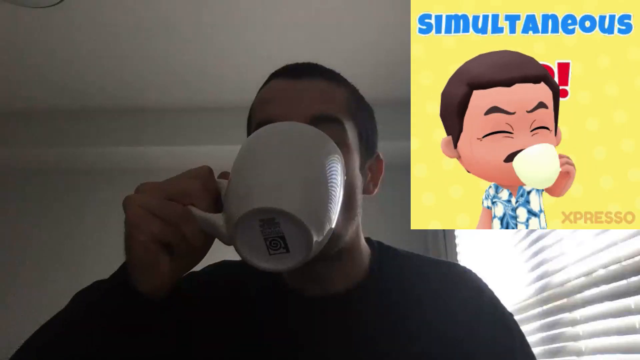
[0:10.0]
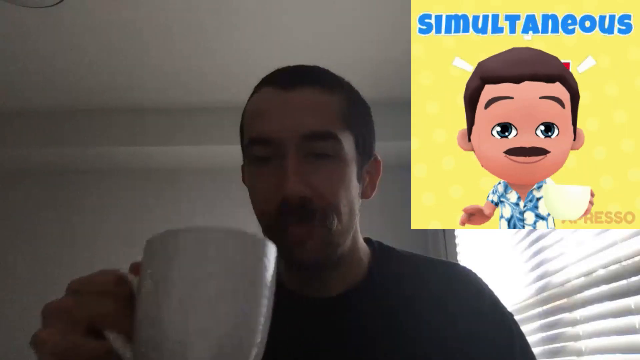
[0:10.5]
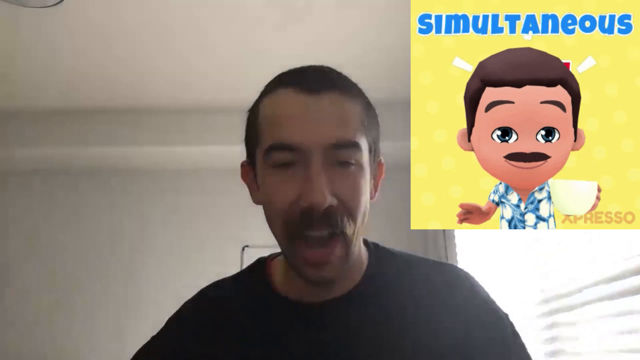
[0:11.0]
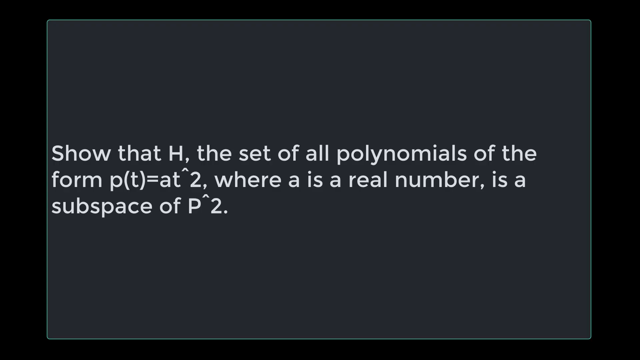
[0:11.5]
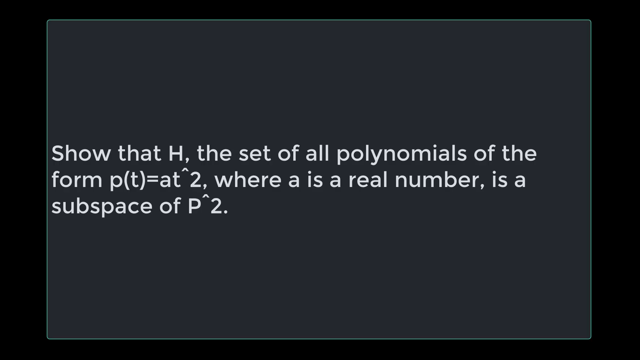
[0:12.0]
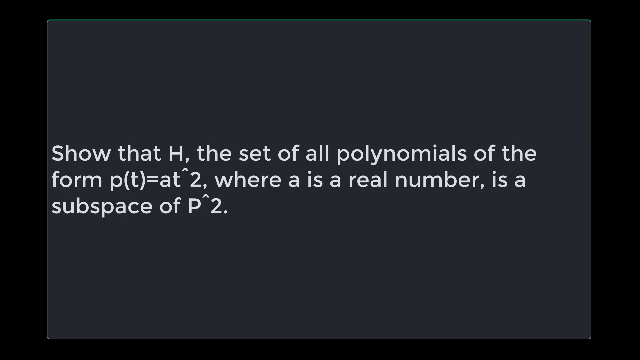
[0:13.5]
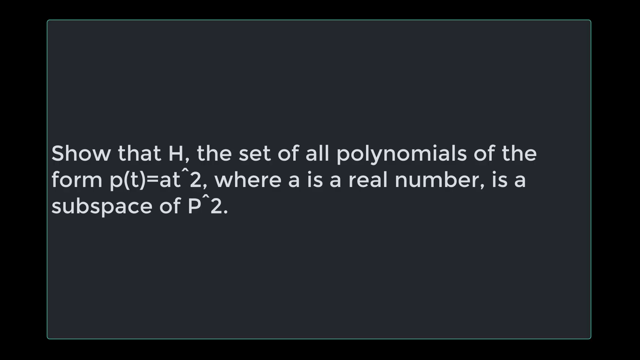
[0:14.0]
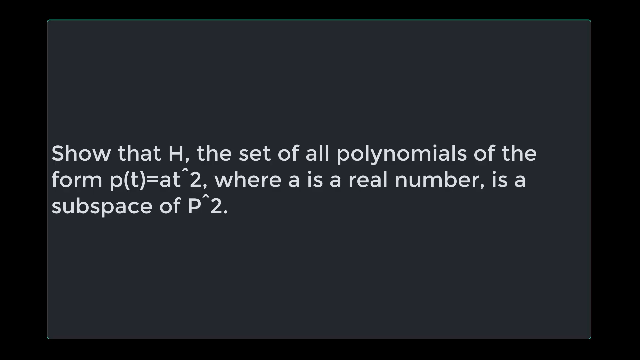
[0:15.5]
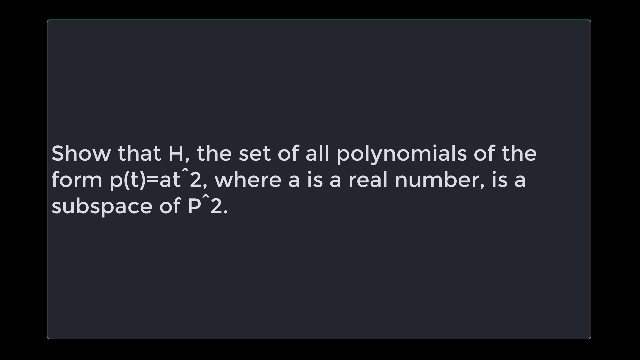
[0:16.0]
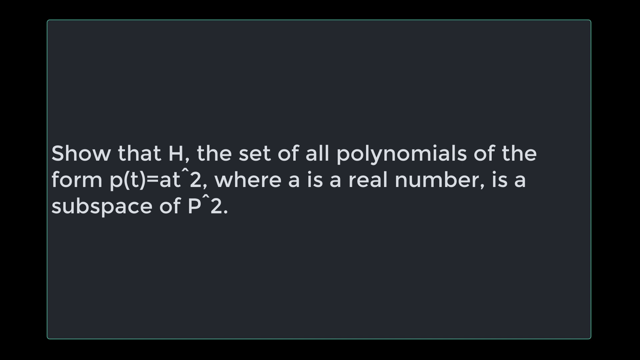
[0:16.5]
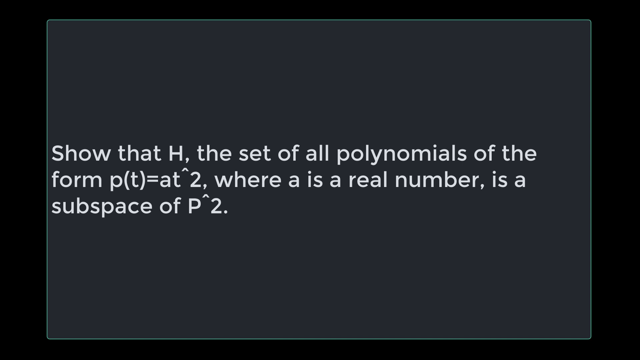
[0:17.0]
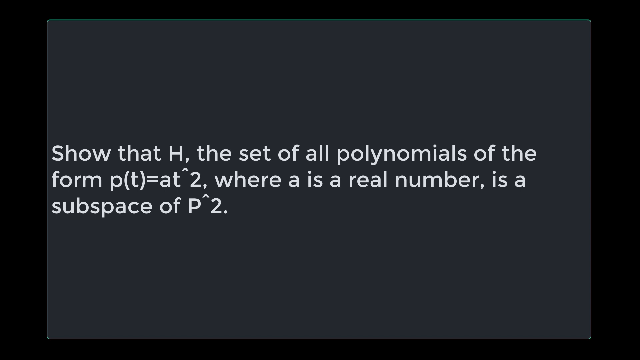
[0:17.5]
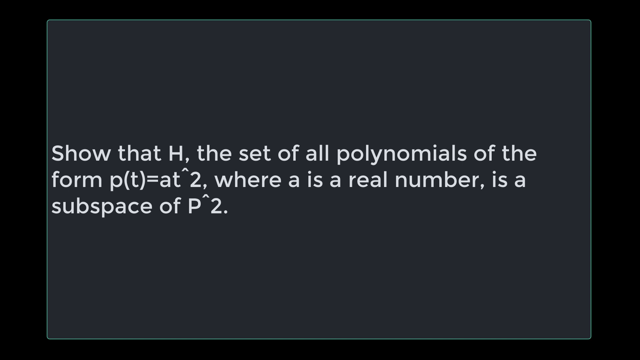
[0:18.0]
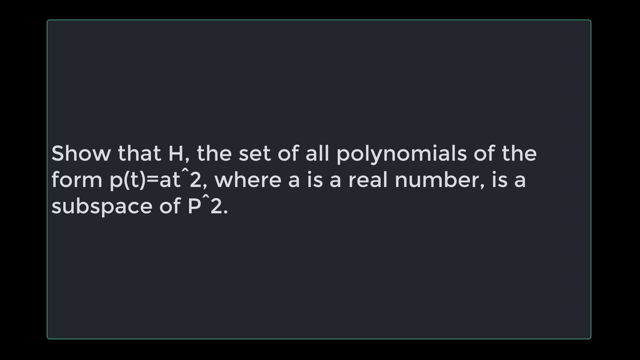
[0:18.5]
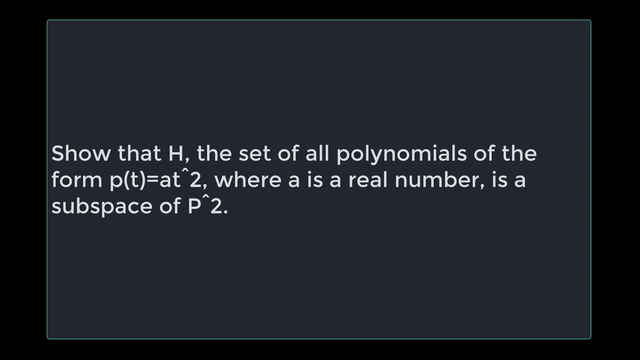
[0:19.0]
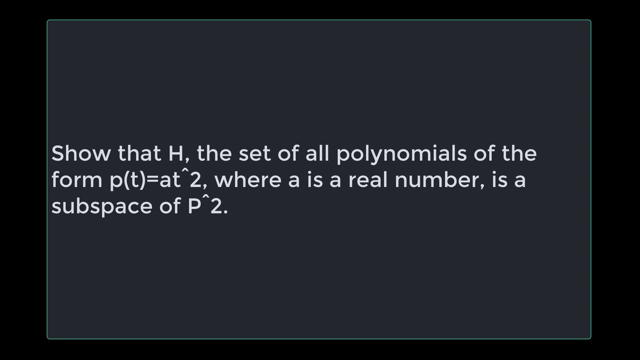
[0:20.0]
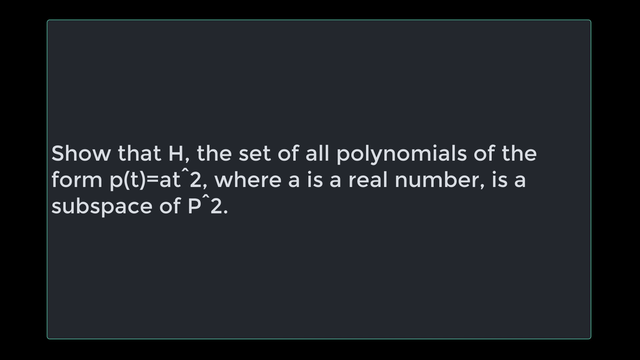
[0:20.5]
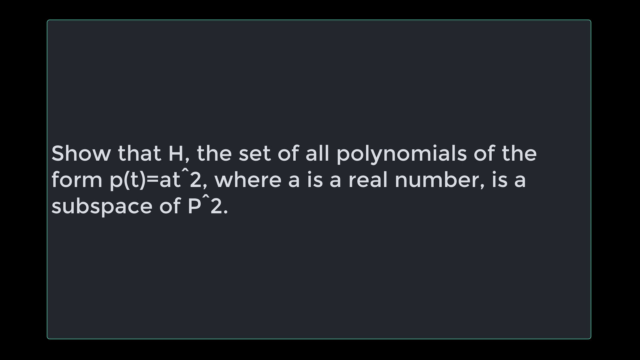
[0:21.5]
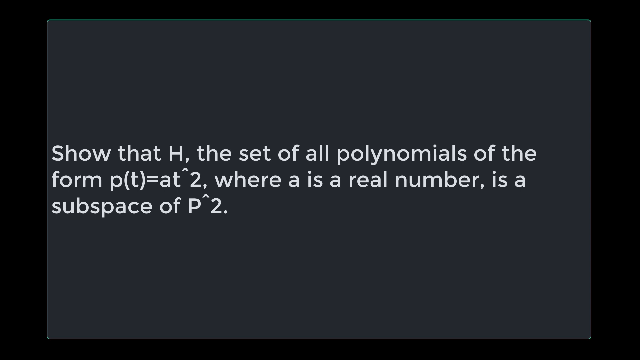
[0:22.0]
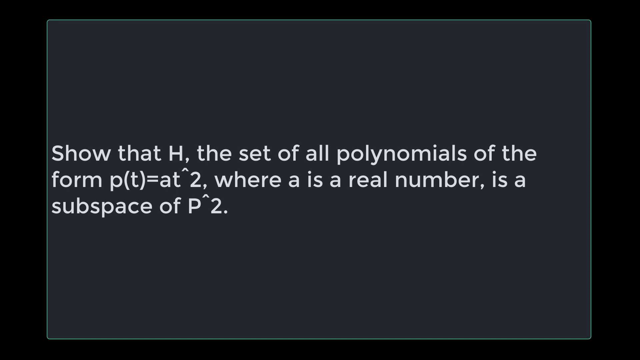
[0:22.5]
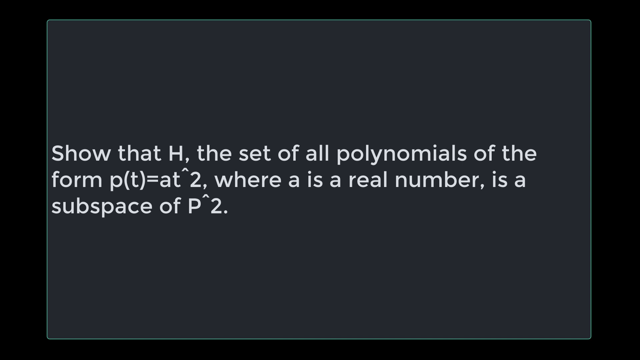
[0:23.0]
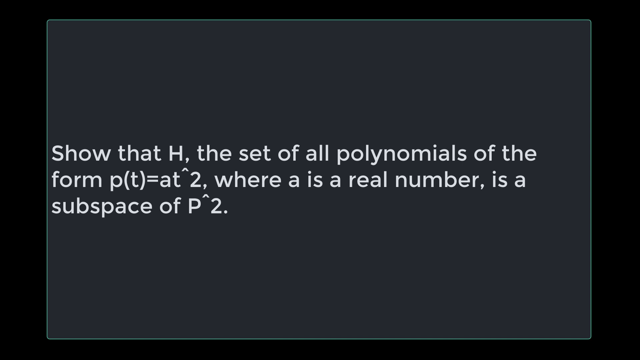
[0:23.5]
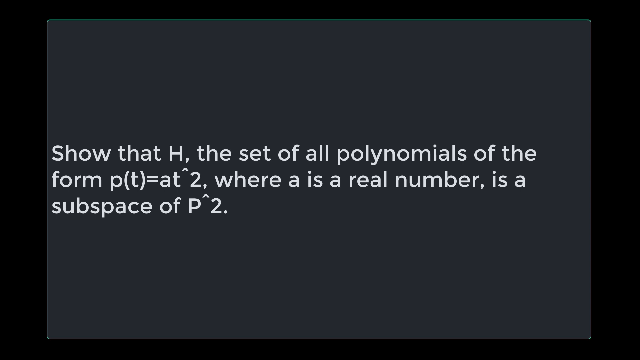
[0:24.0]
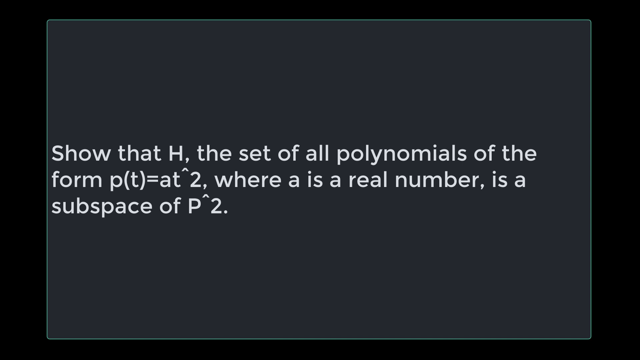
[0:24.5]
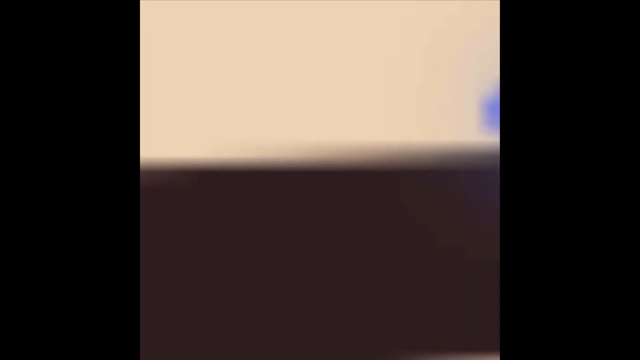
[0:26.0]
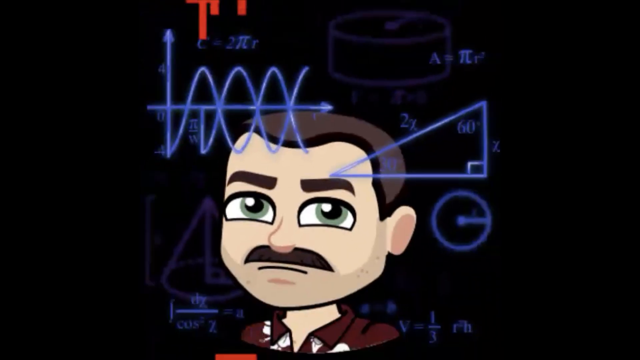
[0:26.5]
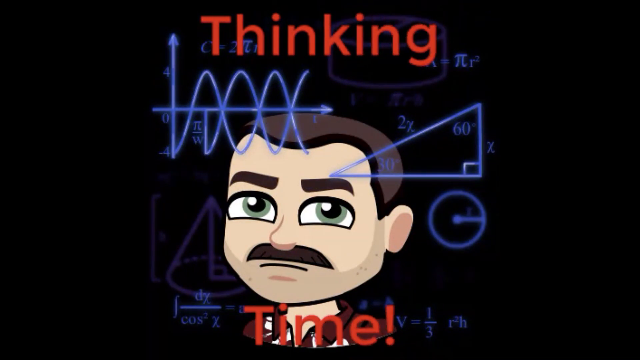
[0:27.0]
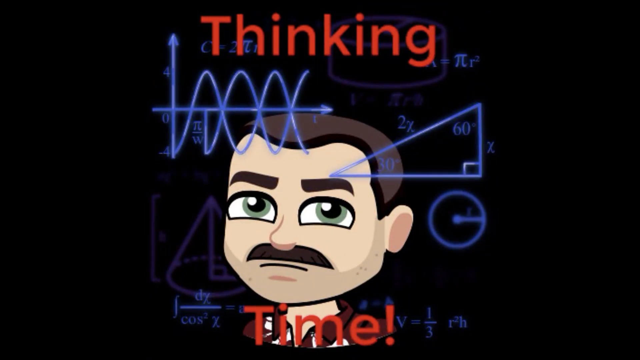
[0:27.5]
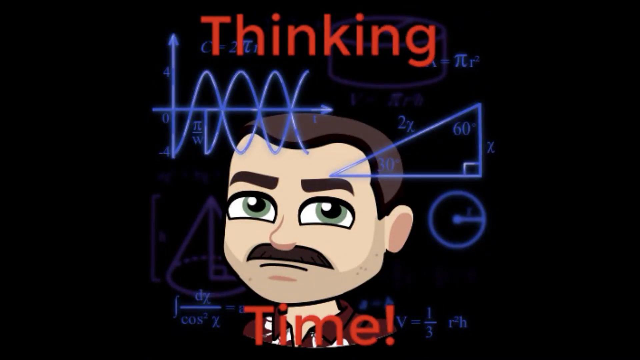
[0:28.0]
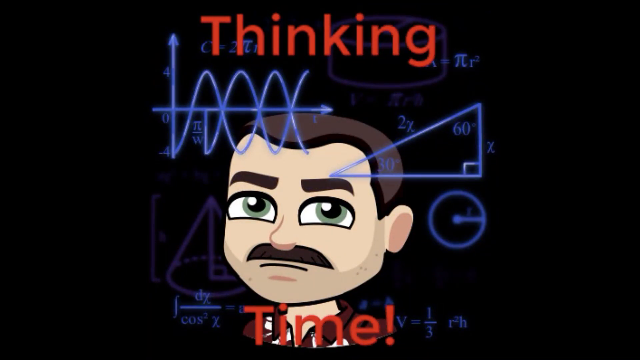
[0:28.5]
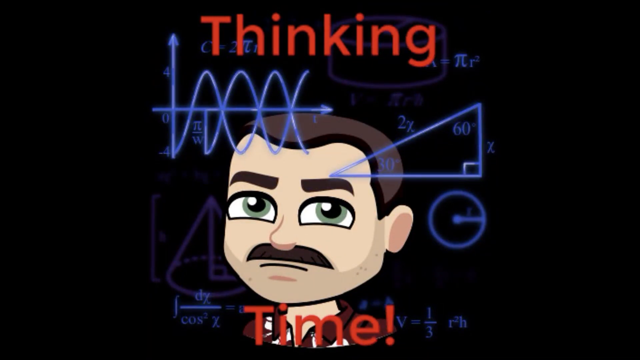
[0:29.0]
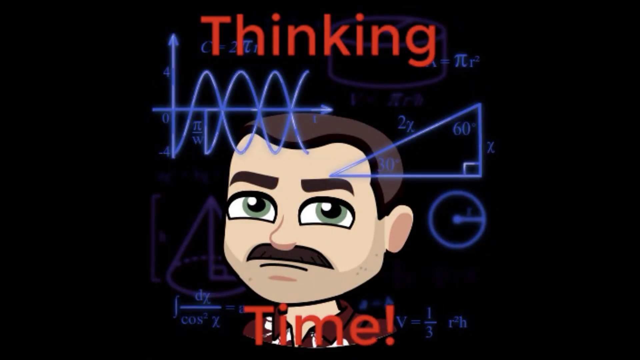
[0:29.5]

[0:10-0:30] After the man and the cartoon character in the upper right corner take a sip from their mugs, the video moves to a black screen with a gray box outlined by a thin green line. Inside the box, typed white lettering begins "show that H the set of all polynomials of the form" followed by an expression, and states that H is a subspace of P2. The screen stays on this page until it moves into another black page where the cartoon man pops up with a mustache, green eyes, and this time apparently brown hair. Around him are multiple different shapes, such as a triangle with its angles highlighted, how to find the diameter and radius of a circle, and other equations. In red at the top it says "thinking," and below the character's chin it says "time!" in red.